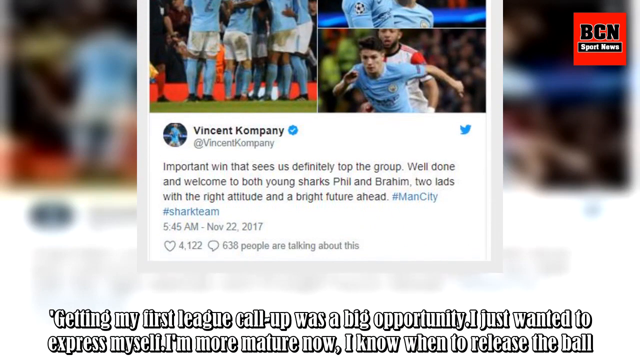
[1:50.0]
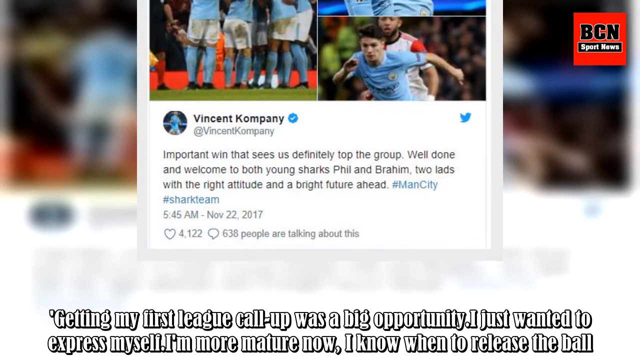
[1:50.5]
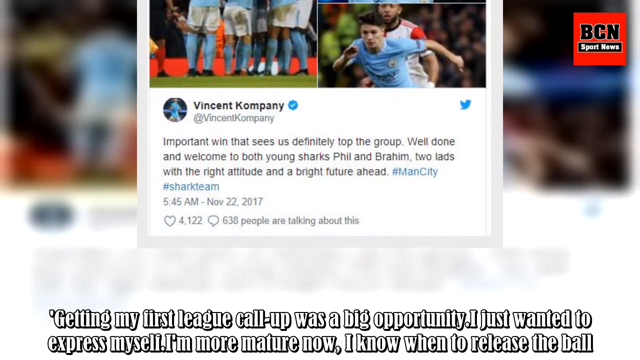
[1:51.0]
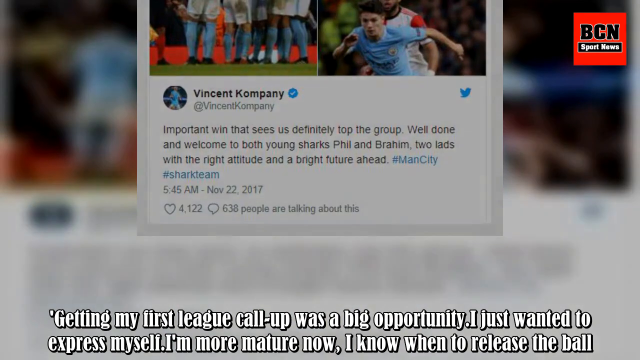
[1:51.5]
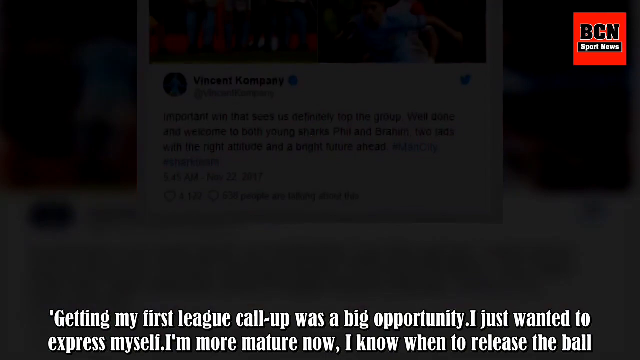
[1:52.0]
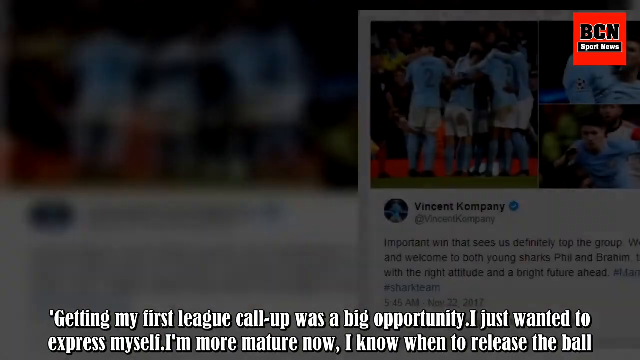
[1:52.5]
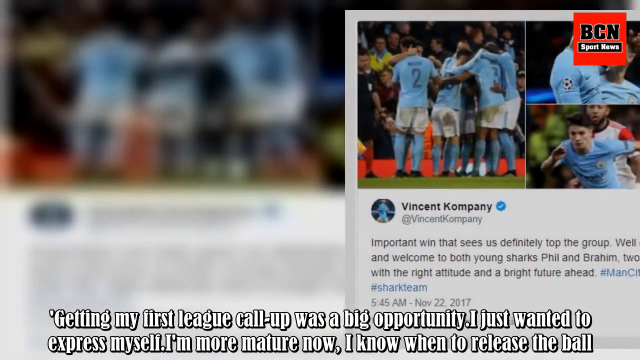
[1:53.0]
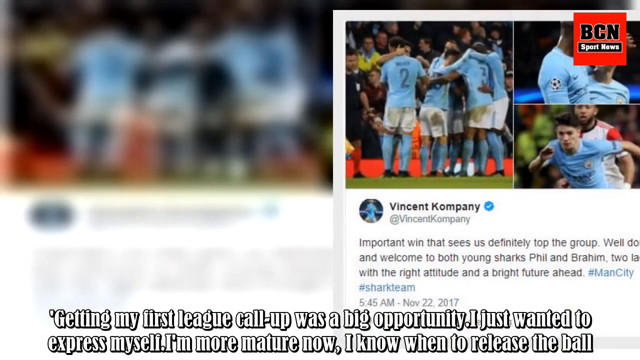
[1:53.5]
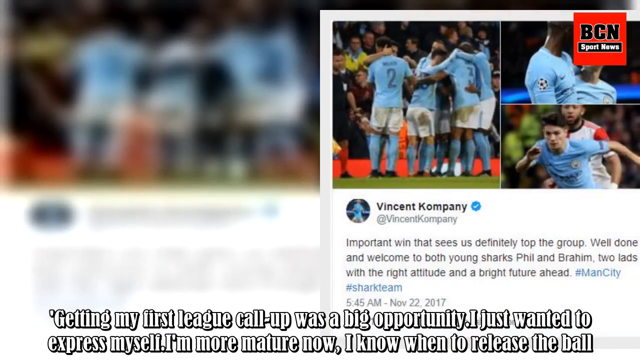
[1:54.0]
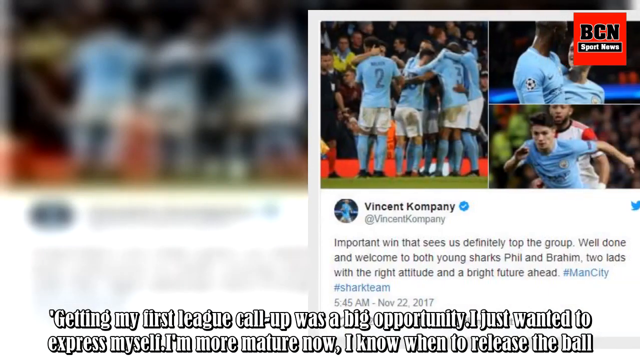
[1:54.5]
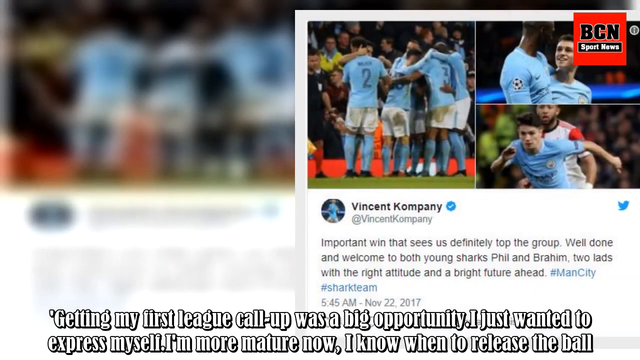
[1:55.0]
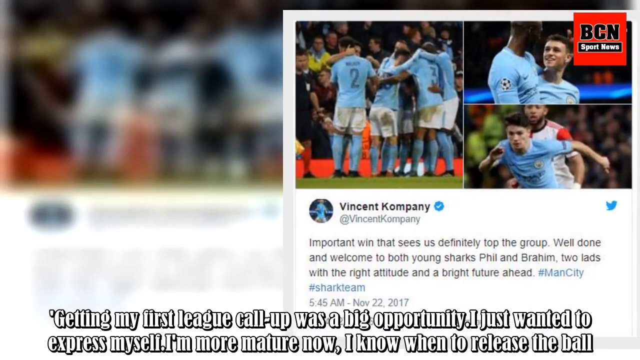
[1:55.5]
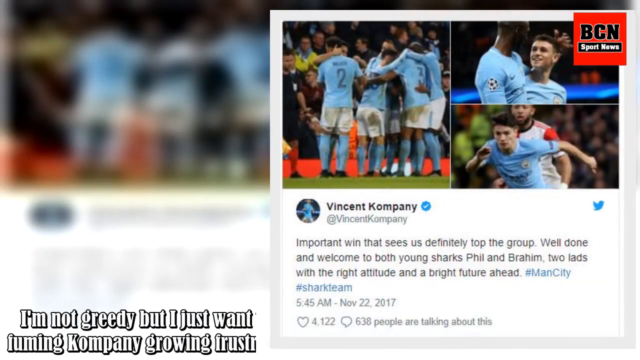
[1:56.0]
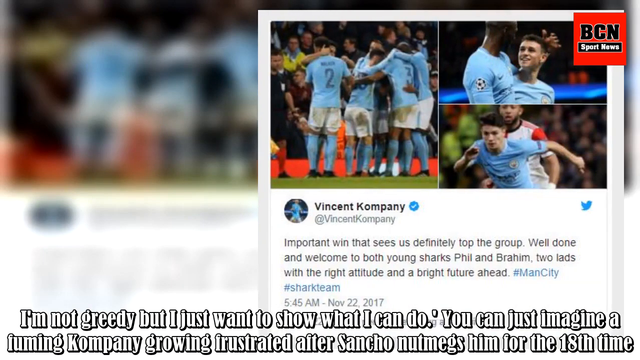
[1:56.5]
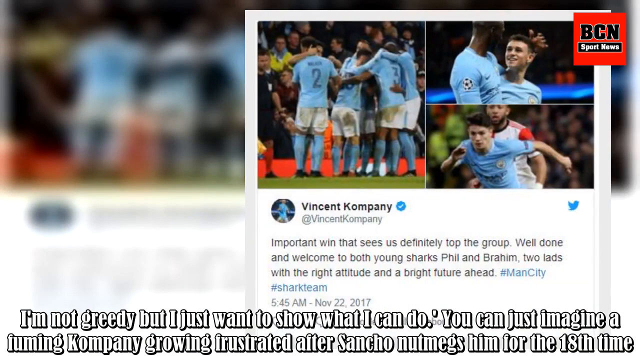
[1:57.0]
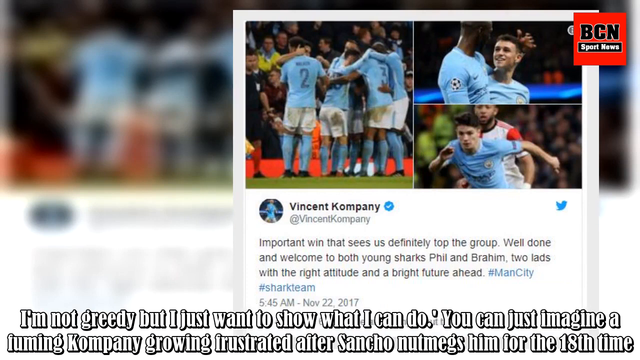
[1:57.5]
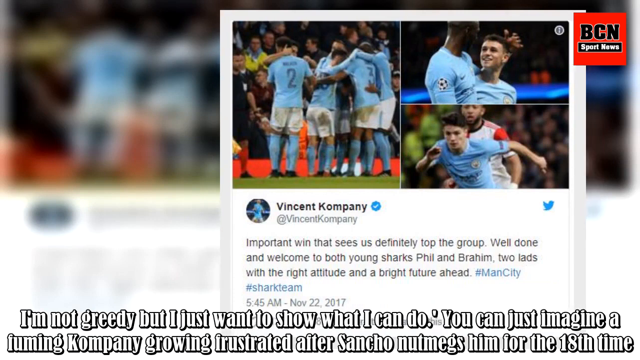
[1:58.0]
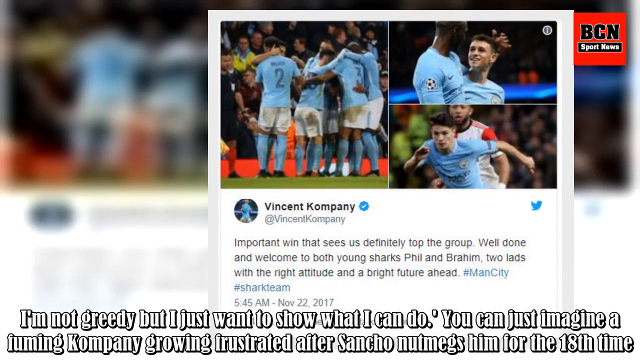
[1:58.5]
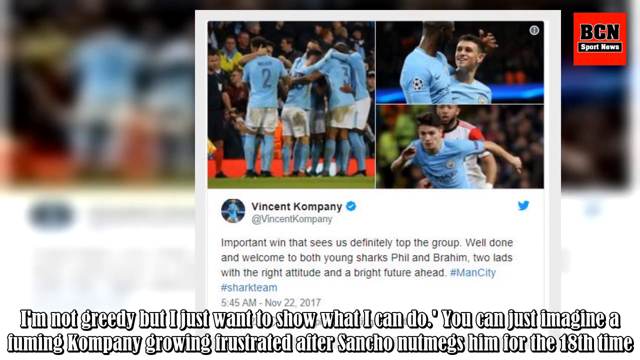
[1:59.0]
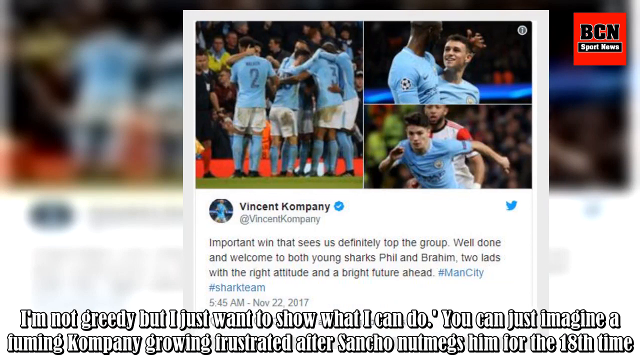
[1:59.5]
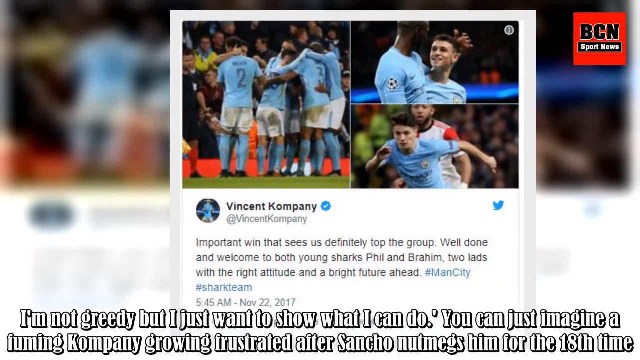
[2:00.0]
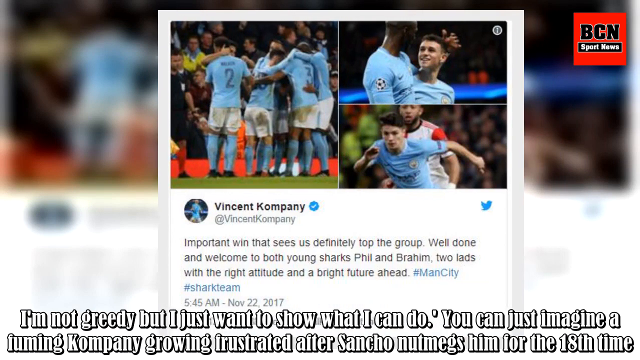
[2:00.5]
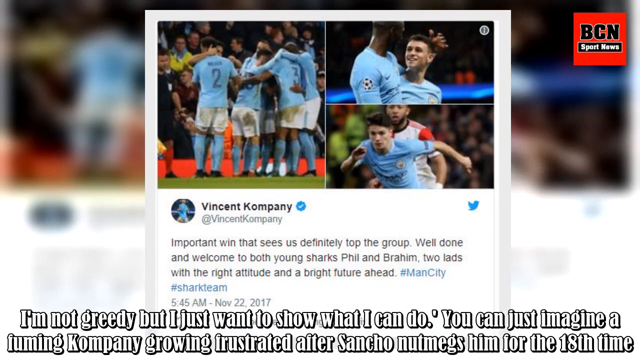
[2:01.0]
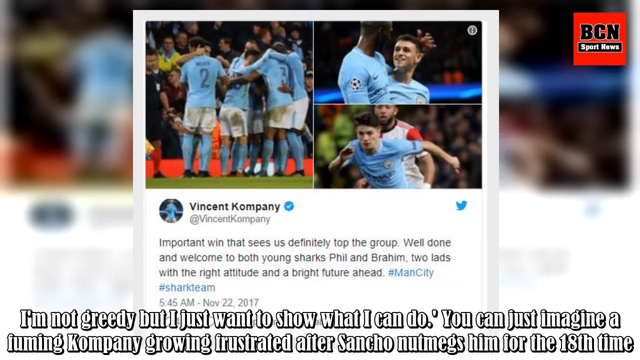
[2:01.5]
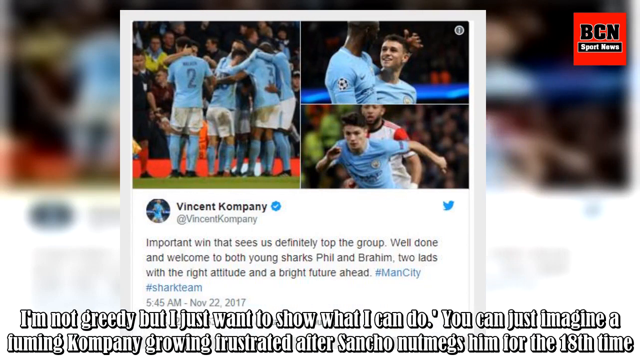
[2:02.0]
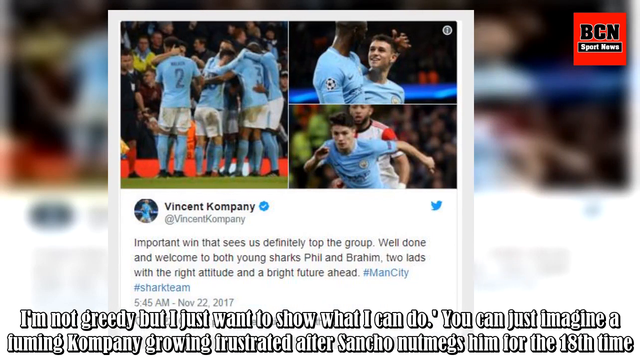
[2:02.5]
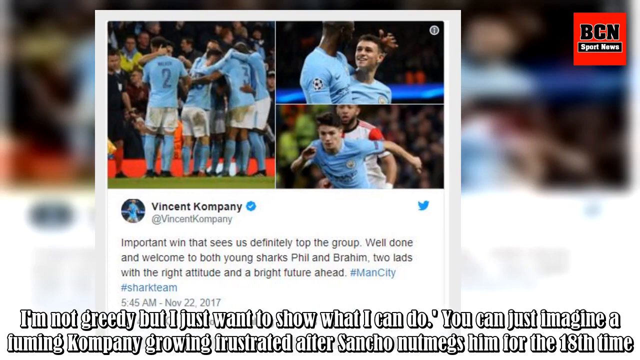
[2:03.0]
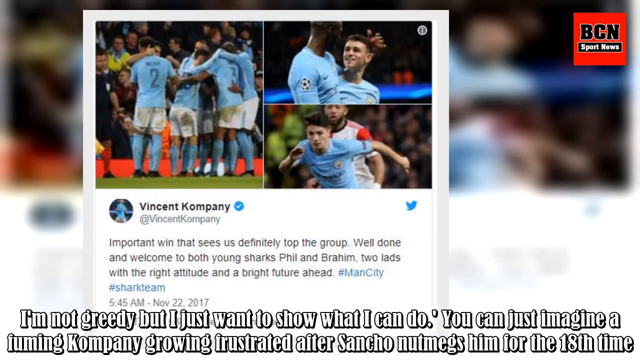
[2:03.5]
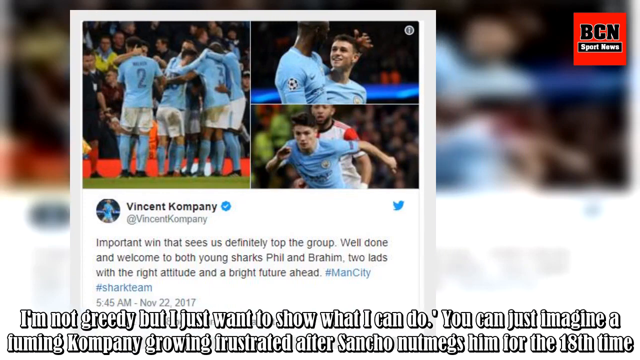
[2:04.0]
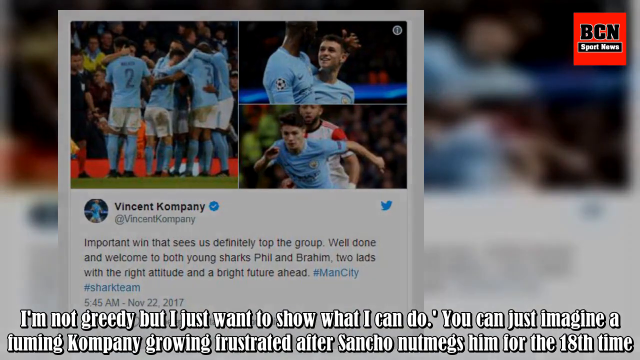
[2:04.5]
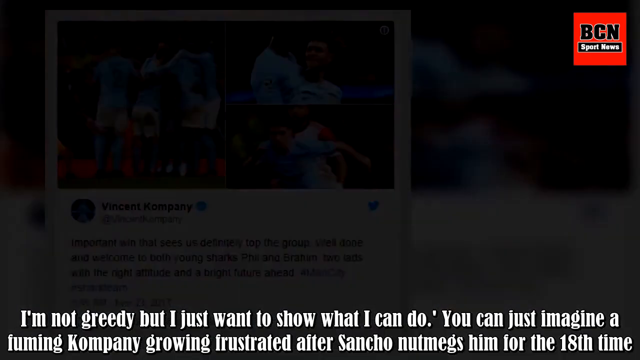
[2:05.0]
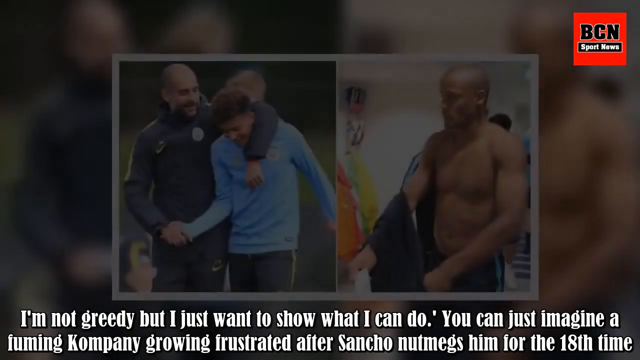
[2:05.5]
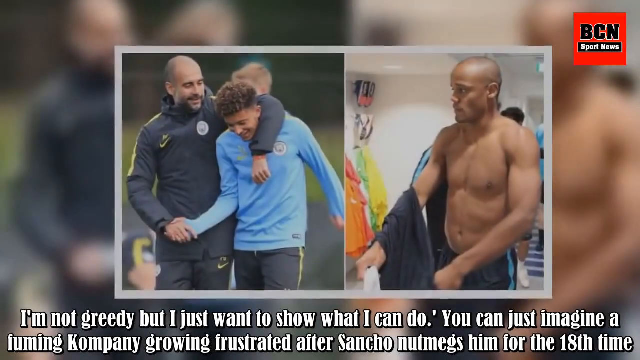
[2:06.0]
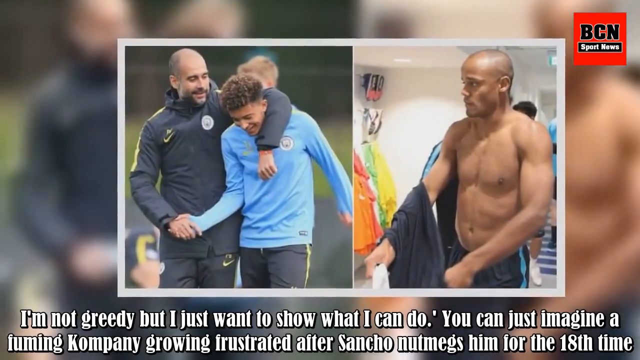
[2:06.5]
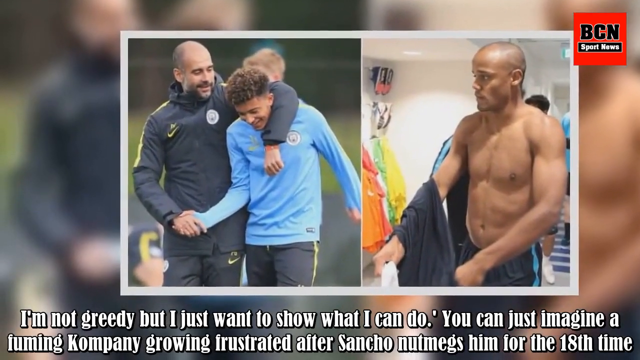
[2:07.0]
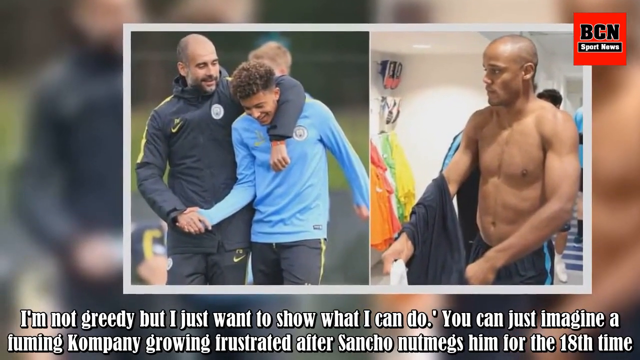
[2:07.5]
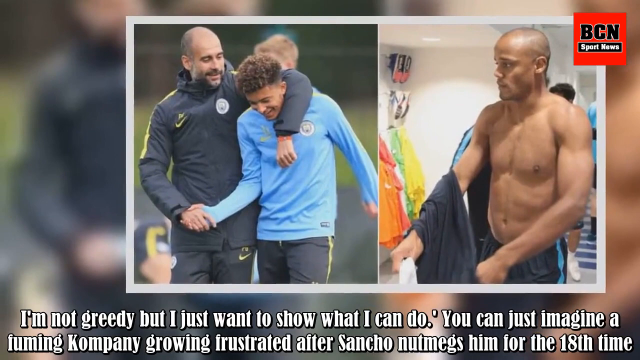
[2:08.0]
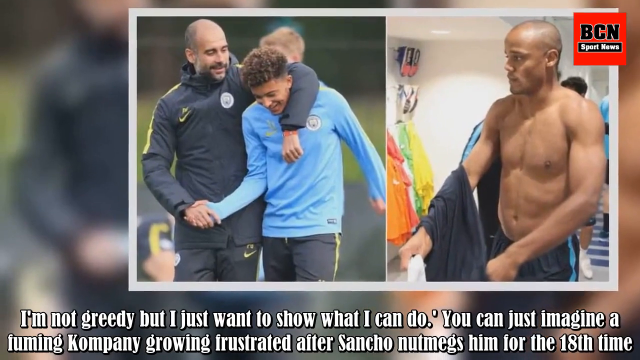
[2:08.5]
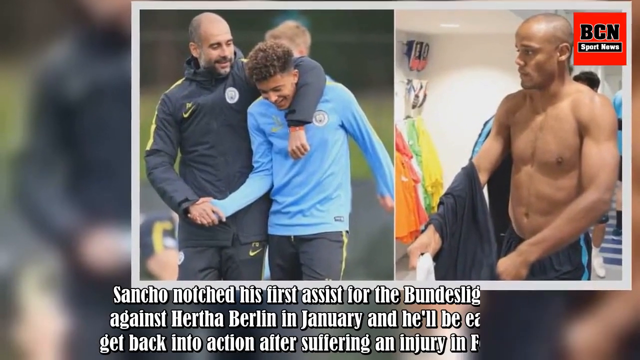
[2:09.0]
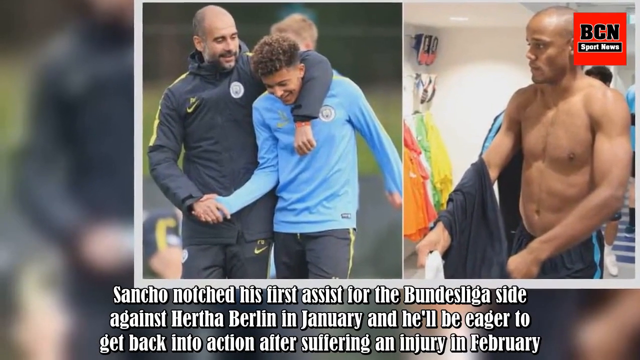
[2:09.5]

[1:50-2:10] What looks like a Twitter post shows three images on top with the post underneath. The images show soccer players in light blue jerseys. In the one on the left, the players wear light blue jerseys, white shorts and light blue socks. A picture on the right shows a soccer player in a light blue jersey with his arms kind of extended backwards, looking like he is defending against a player behind him in a white and red jersey. Beneath the images is a Twitter logo, a name in black reading "Vincent Company," and a paragraph in black that reads "an important win that sees us definitely top the group, well done. And welcome to both Young Sharks, Phil and Bram. Two lads with the right attitude and the right future ahead." Hashtags follow in blue.